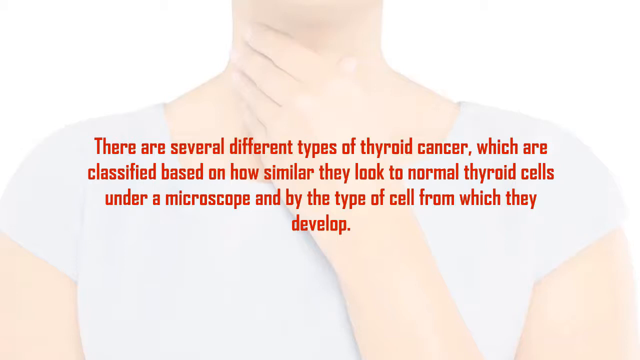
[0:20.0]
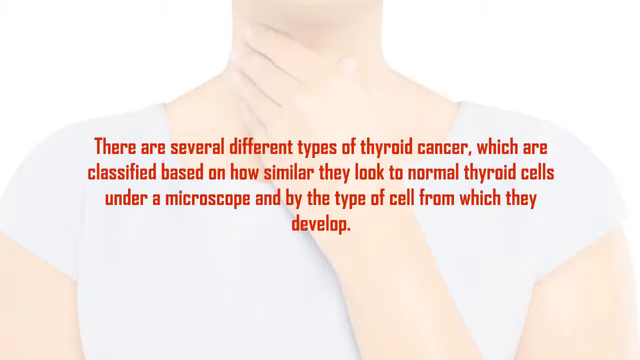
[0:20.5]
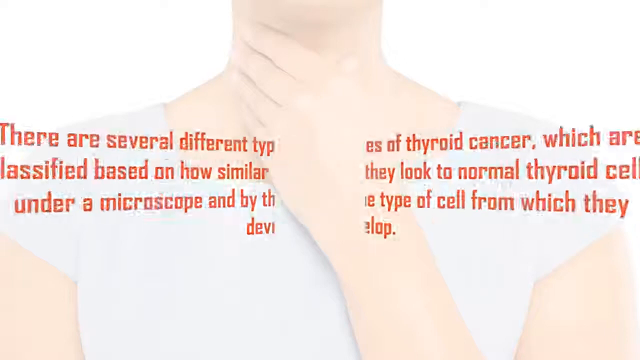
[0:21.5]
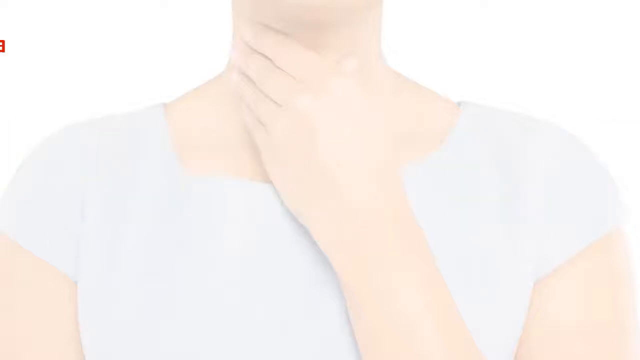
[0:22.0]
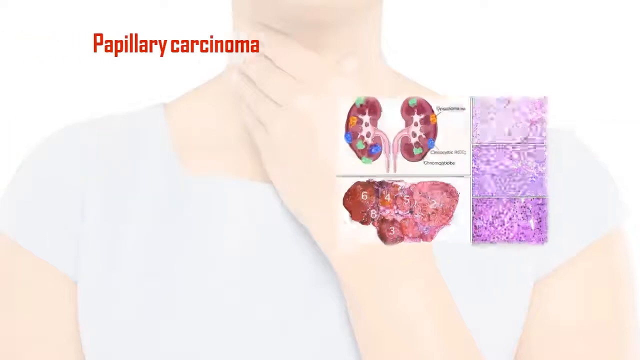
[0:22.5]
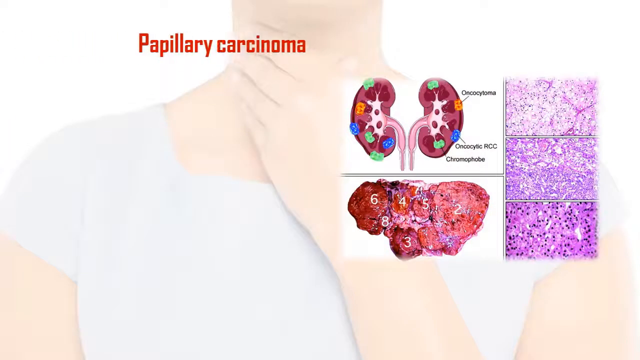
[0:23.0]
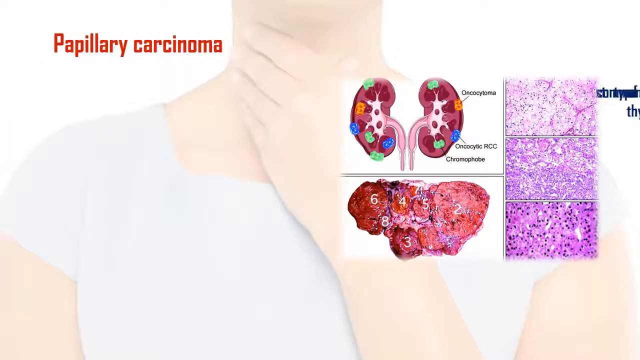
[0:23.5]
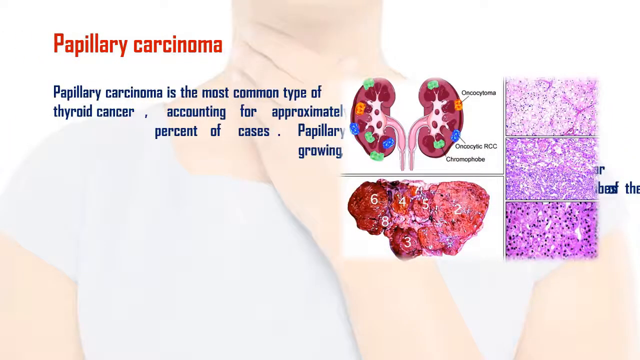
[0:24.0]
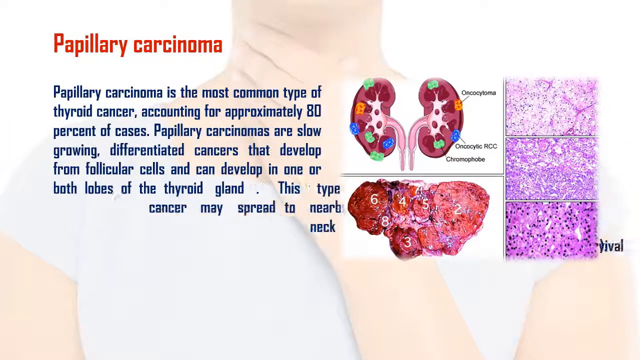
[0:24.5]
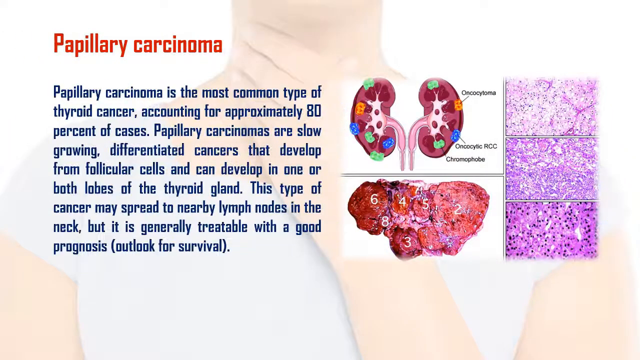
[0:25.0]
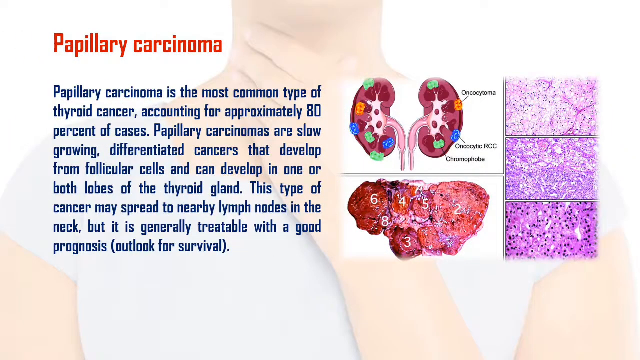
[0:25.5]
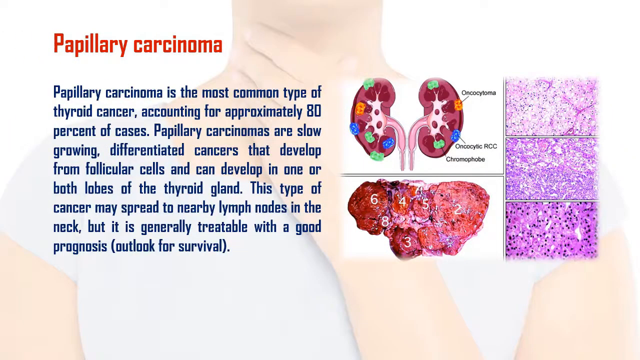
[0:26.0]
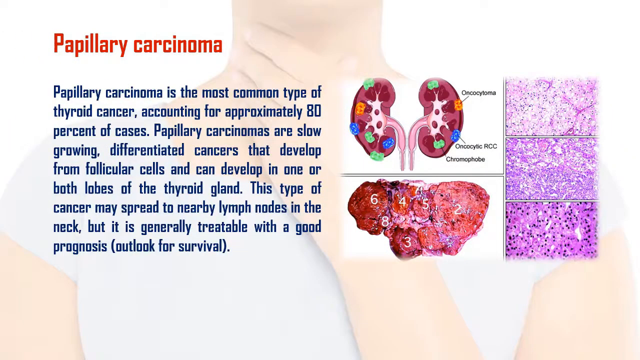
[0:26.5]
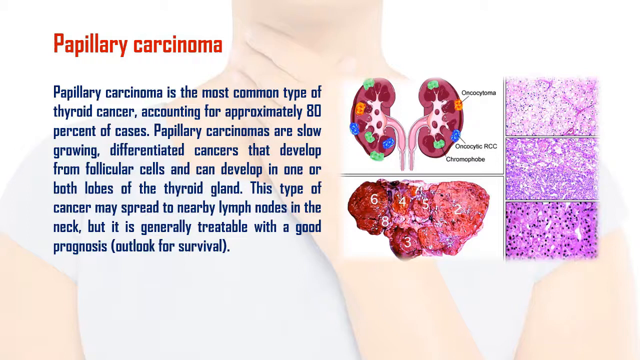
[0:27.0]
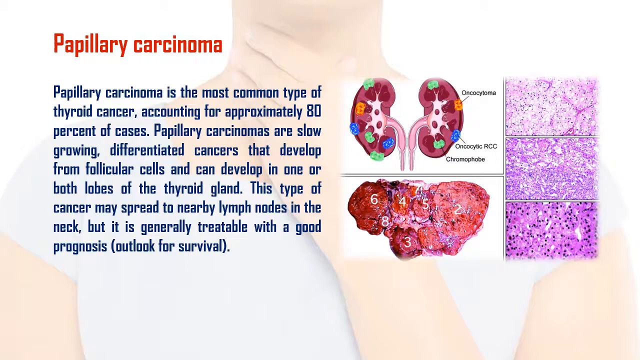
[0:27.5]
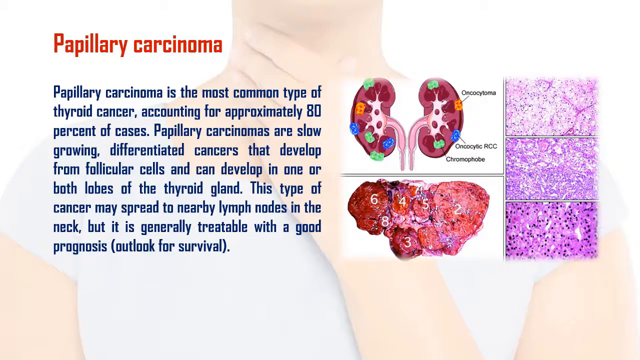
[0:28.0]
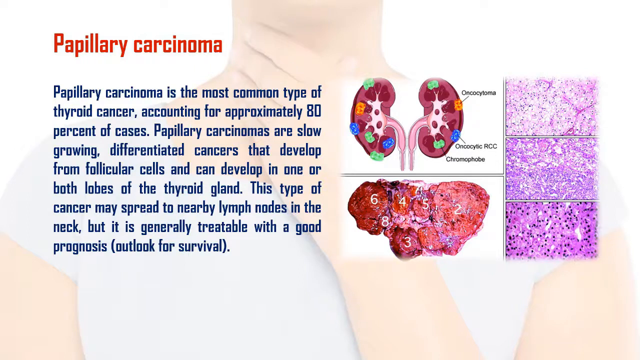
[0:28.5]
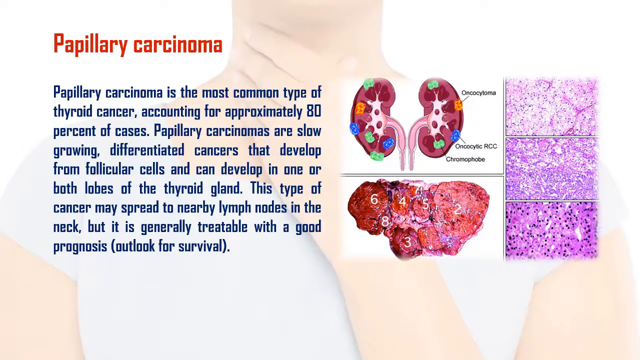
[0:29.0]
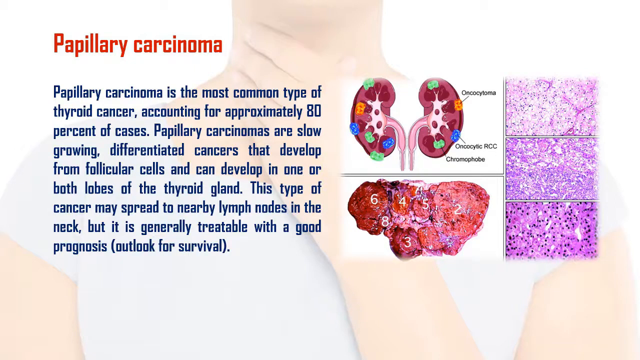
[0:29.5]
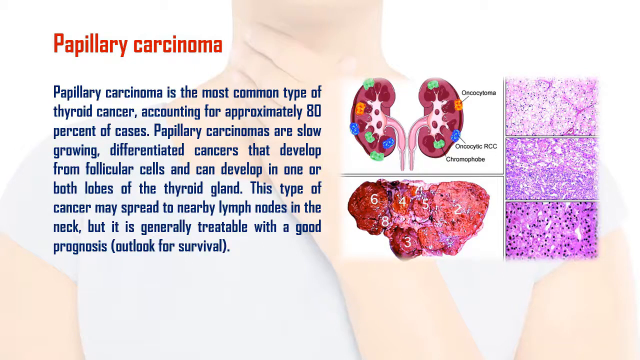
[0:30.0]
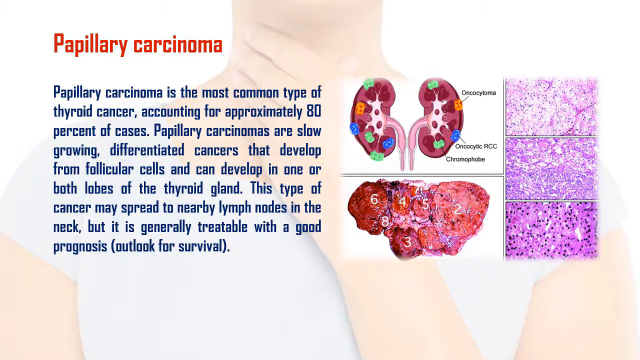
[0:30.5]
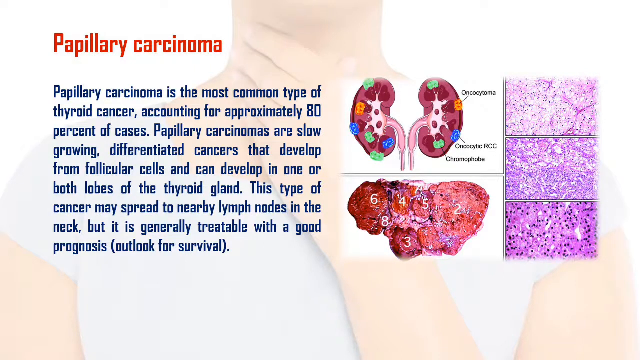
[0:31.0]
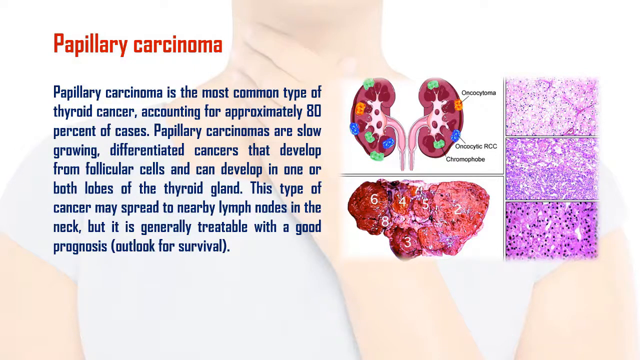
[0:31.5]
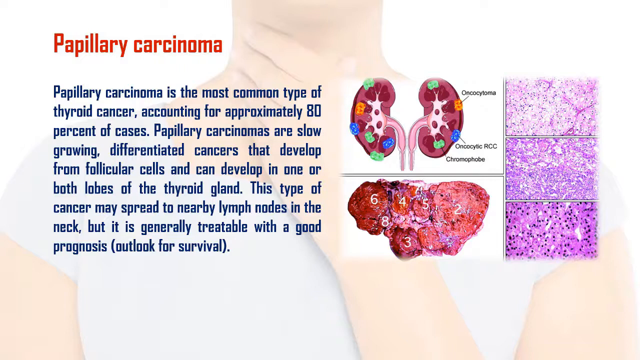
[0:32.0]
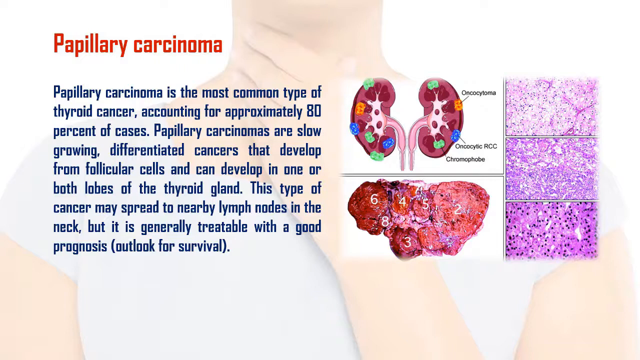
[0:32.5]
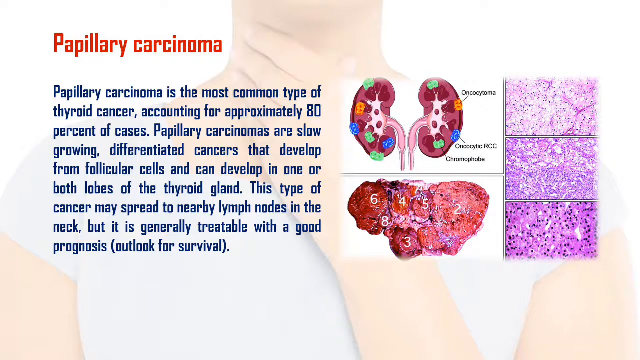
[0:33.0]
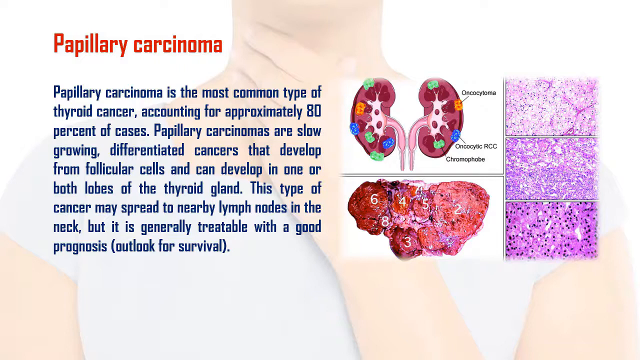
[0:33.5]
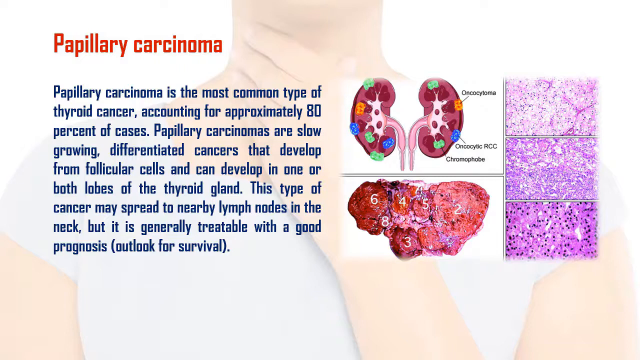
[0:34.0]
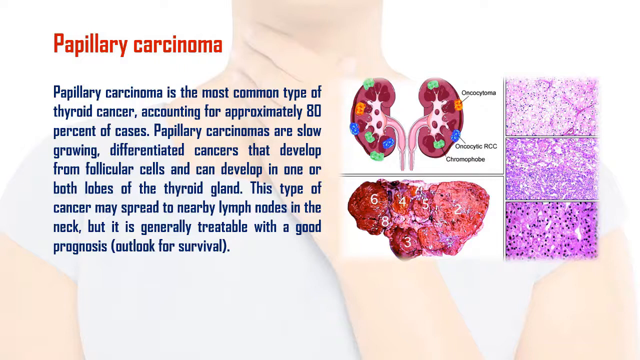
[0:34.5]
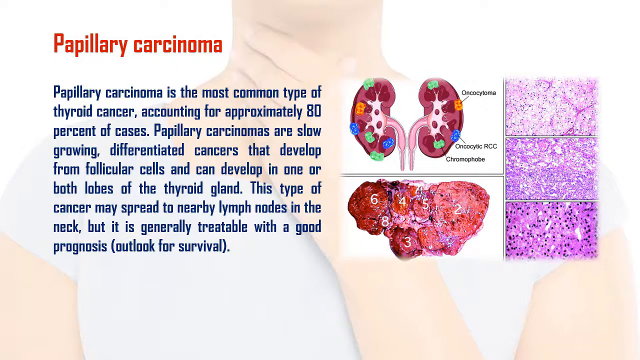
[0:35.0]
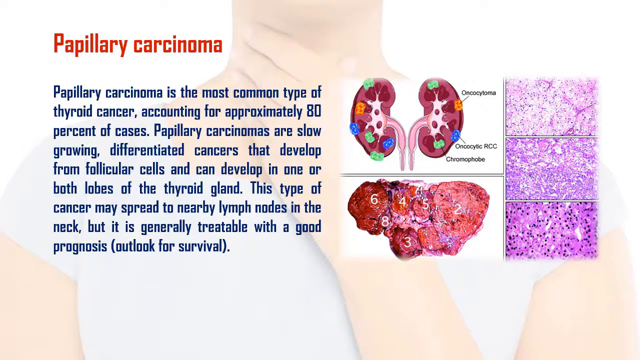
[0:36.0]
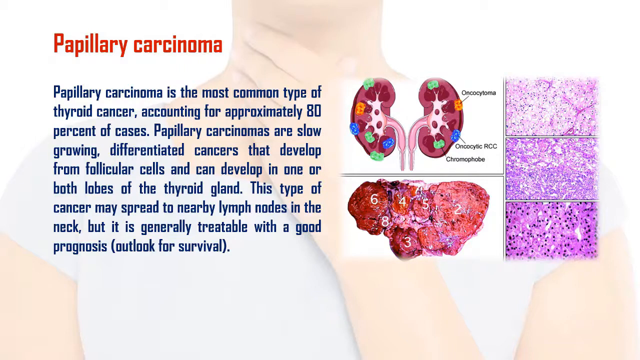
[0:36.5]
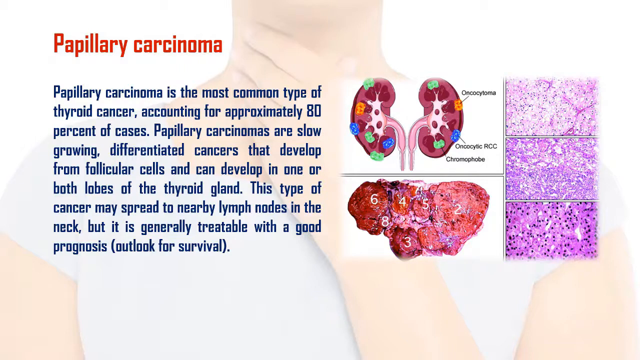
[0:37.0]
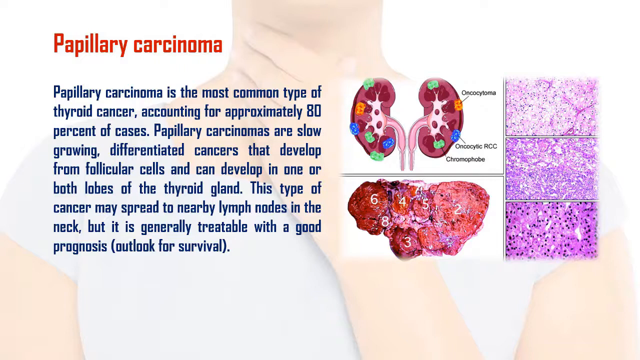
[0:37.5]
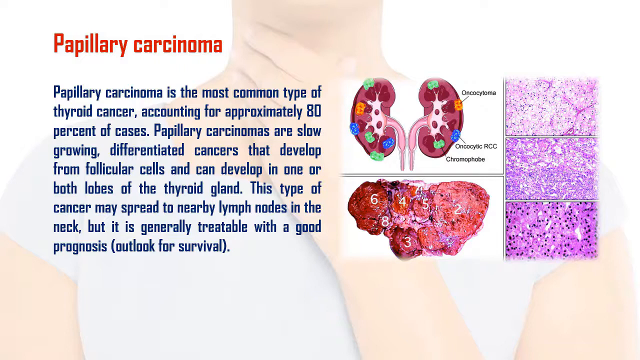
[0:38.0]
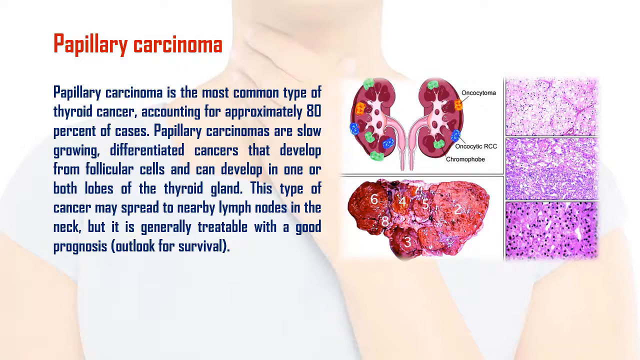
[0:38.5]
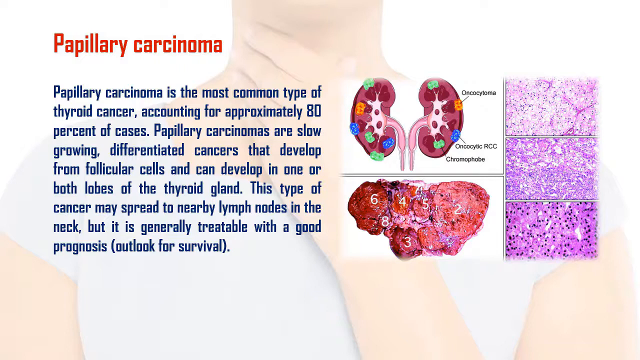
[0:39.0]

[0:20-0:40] A woman is shown from the chest up to the top of her chin, facing forward, in what looks like a digitally enhanced image. She is Caucasian with pale skin, her left arm crosses over her neck, and her fingers are pressed against the side of her throat. Centered red text reads "there are several different types of thyroid cancer which are classified based on how similar they look to normal thyroid cells under a microscope and by the type of cell from which they develop." A new set of information pops up from the upper left, reading "papillary carcinoma" in red text. In the lower right corner, a colour illustrated diagram of the thyroid appears, with what looks like two ears in a red shape and the word "chromophobe" at the bottom right. Below that is the thyroid in what looks like a photo image, red, rocky and lumpy. Three purple close-ups, possibly views under a microscope, are stacked vertically.